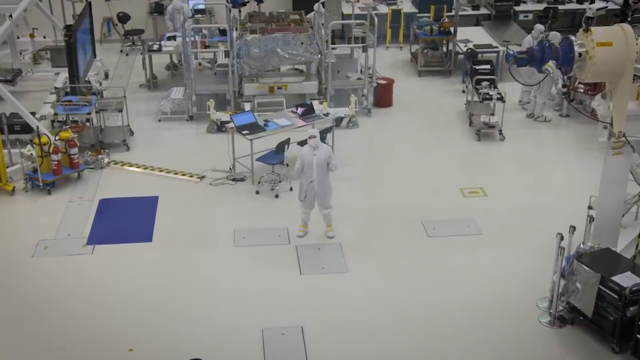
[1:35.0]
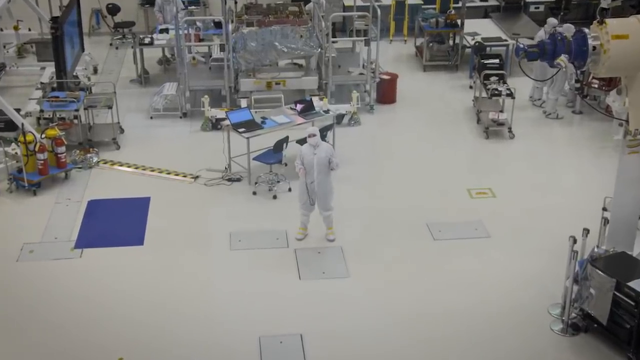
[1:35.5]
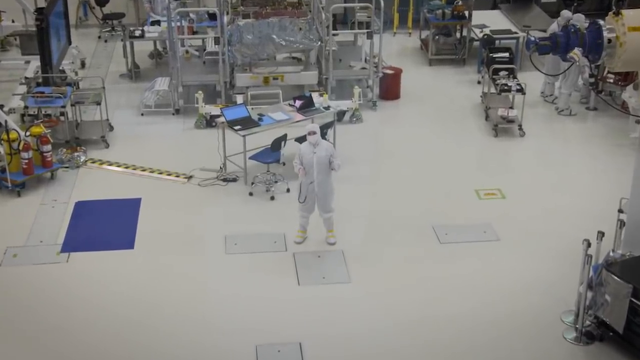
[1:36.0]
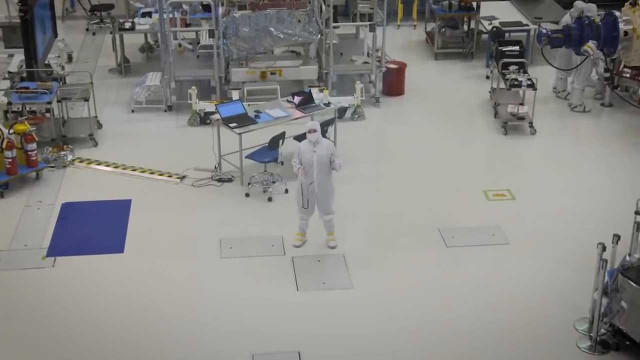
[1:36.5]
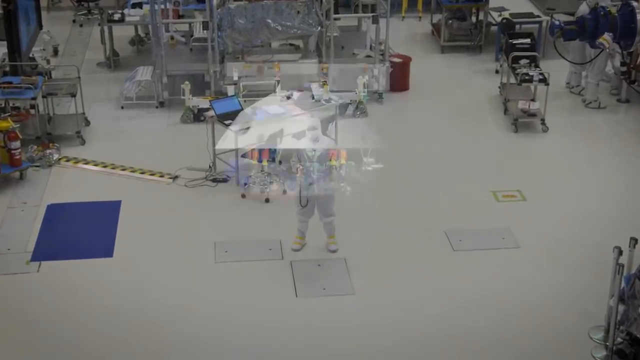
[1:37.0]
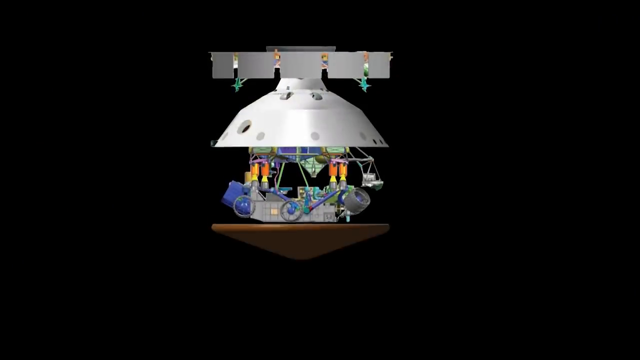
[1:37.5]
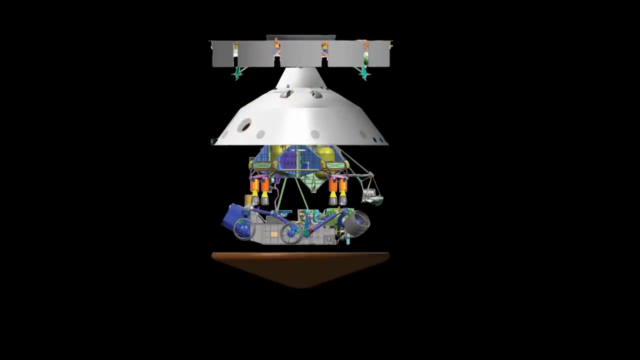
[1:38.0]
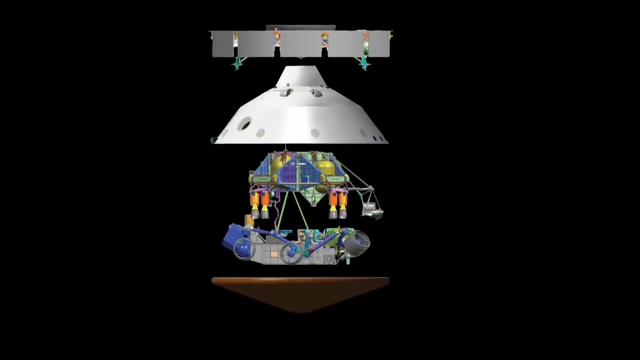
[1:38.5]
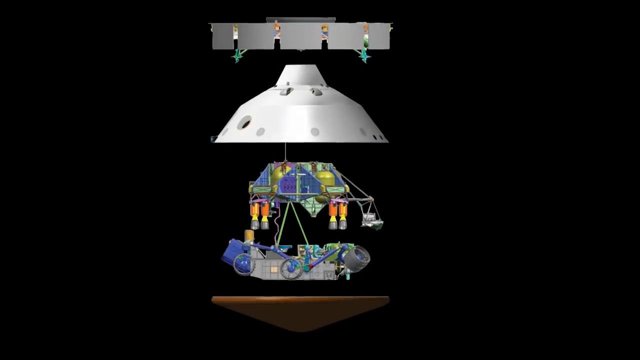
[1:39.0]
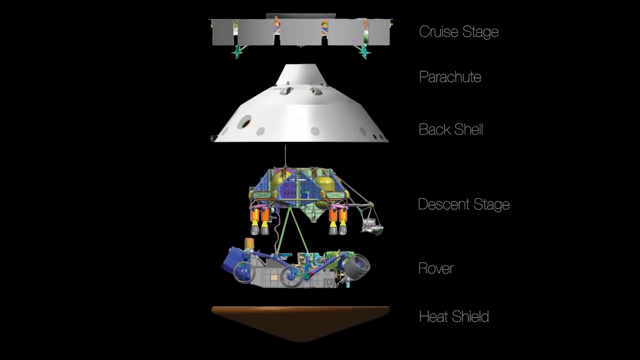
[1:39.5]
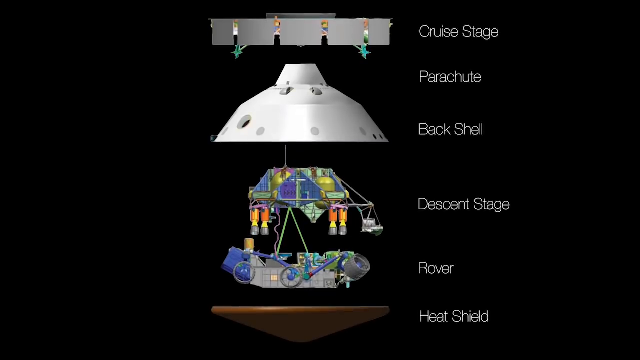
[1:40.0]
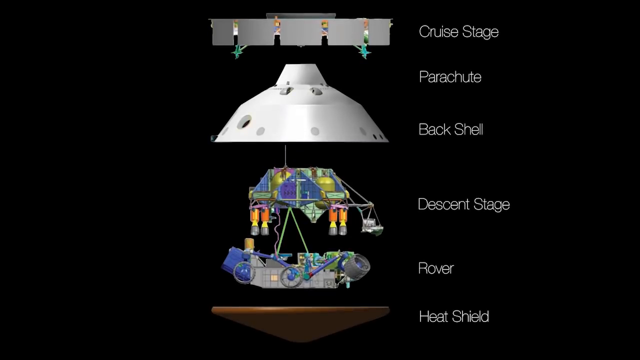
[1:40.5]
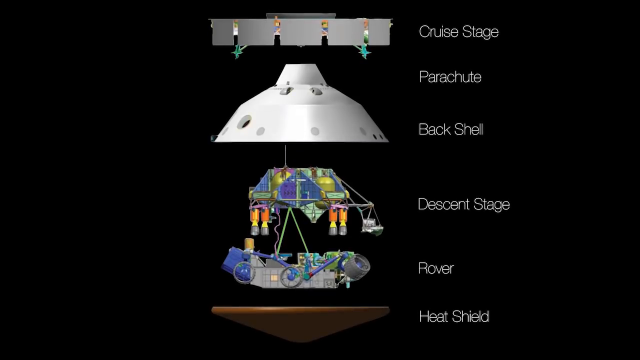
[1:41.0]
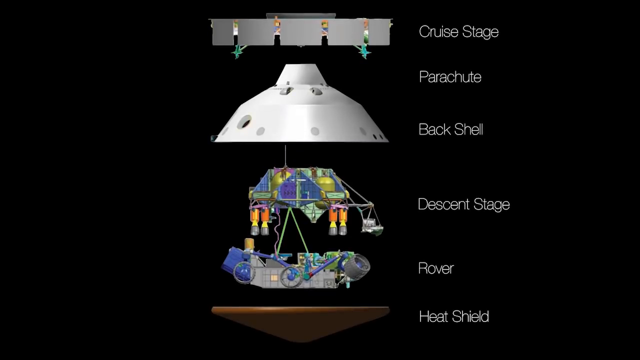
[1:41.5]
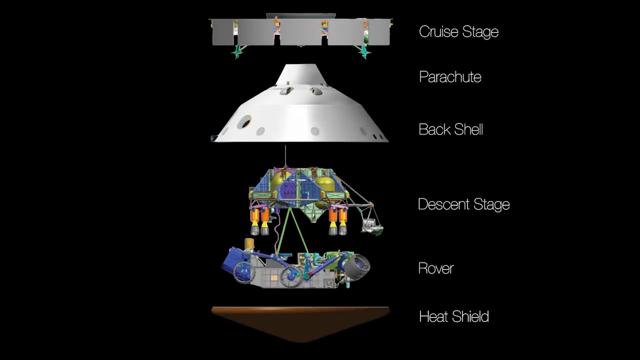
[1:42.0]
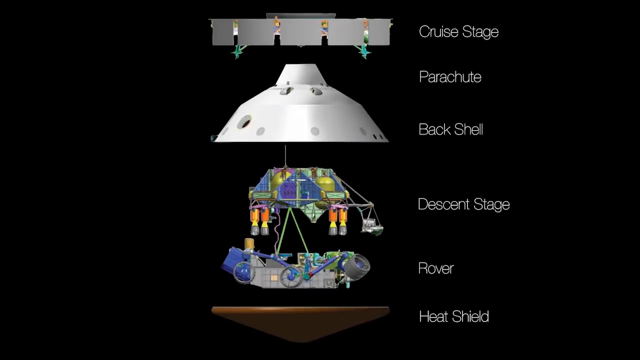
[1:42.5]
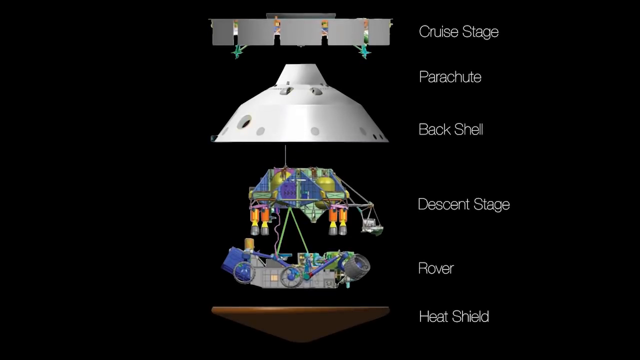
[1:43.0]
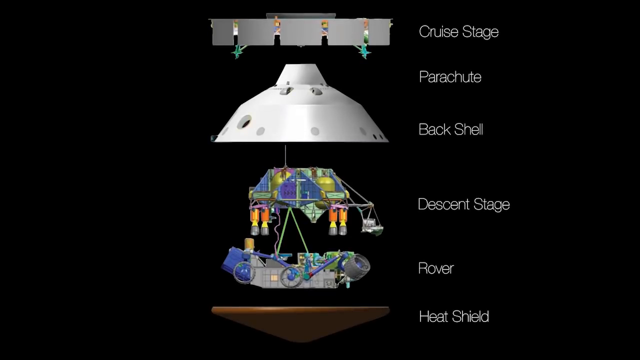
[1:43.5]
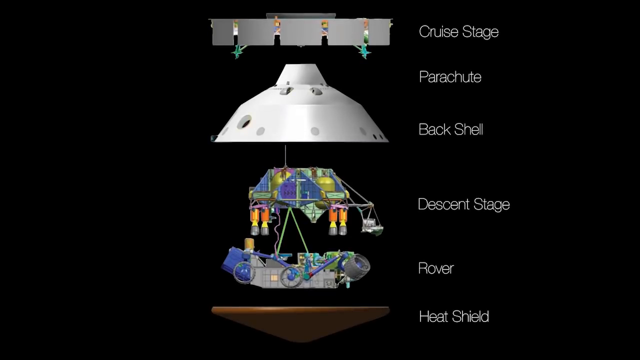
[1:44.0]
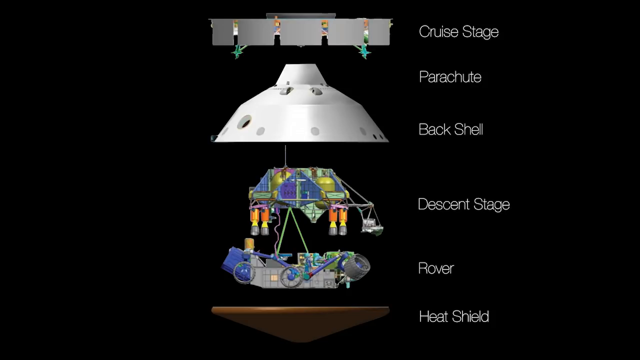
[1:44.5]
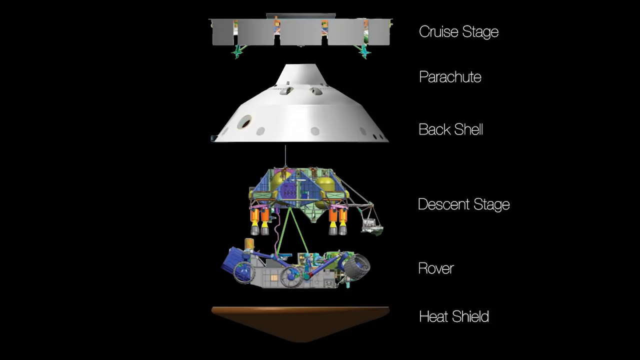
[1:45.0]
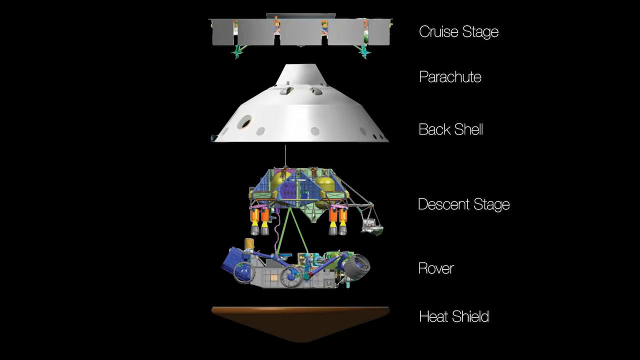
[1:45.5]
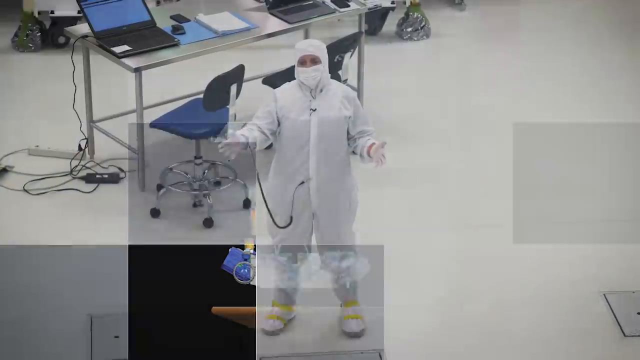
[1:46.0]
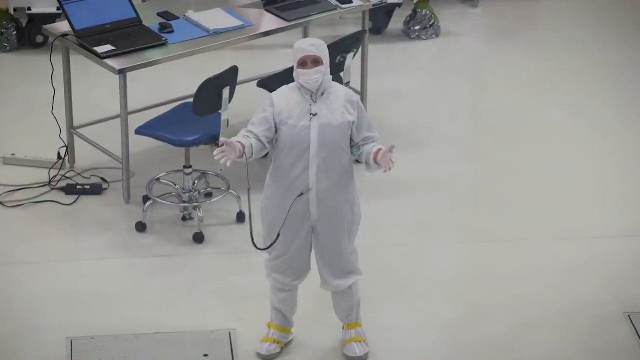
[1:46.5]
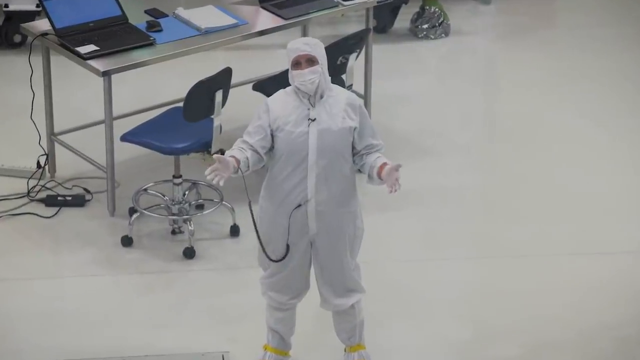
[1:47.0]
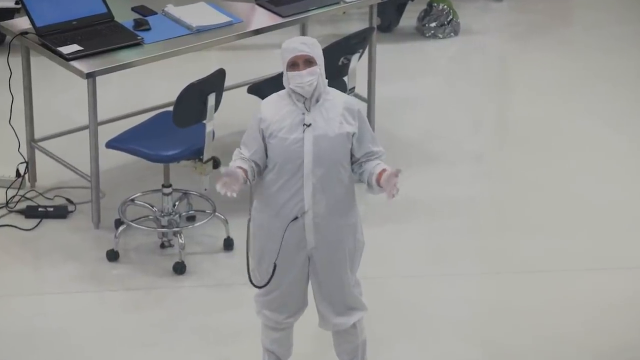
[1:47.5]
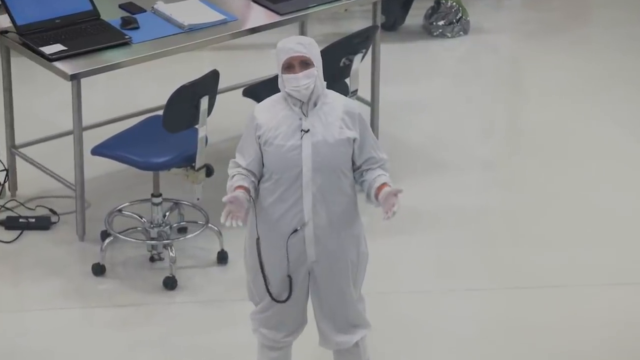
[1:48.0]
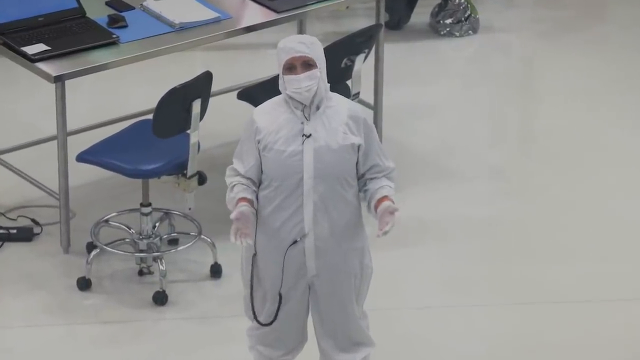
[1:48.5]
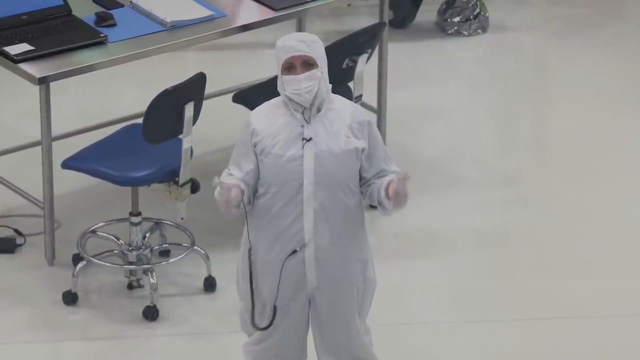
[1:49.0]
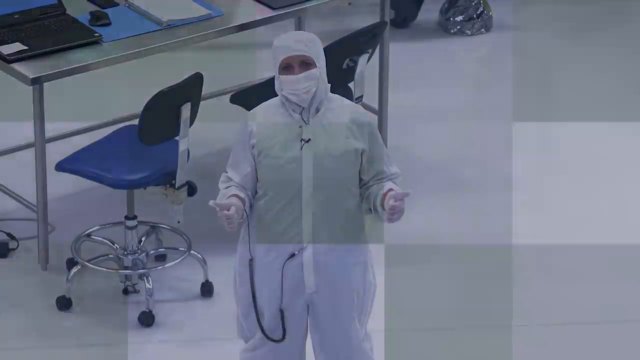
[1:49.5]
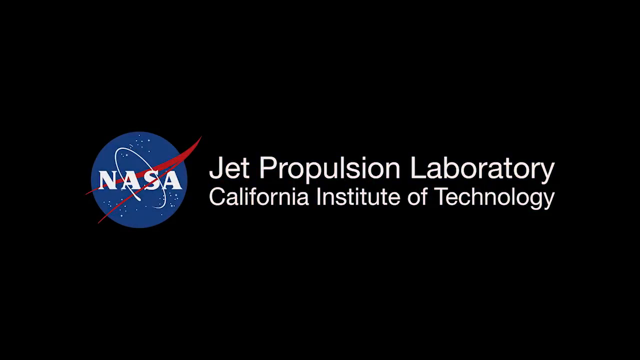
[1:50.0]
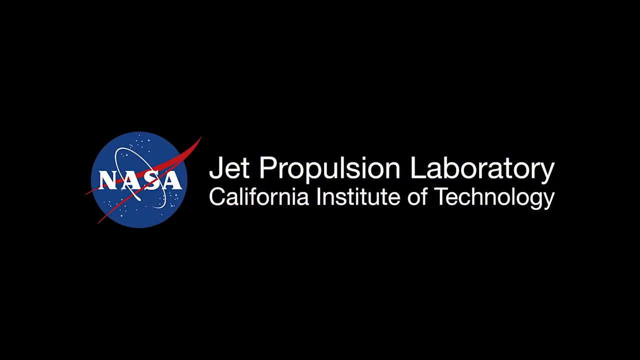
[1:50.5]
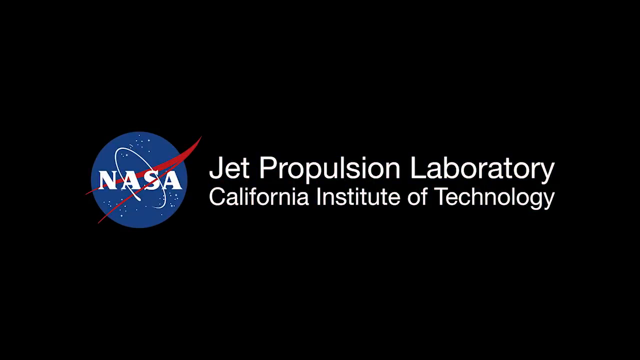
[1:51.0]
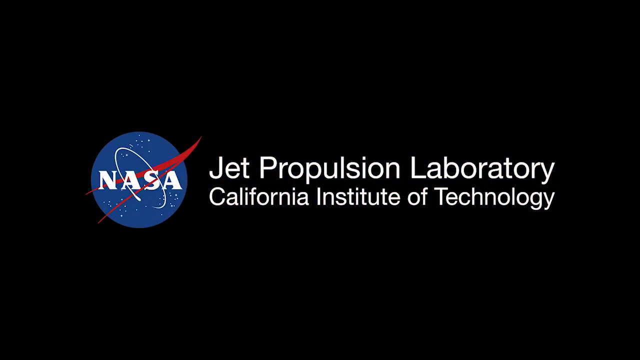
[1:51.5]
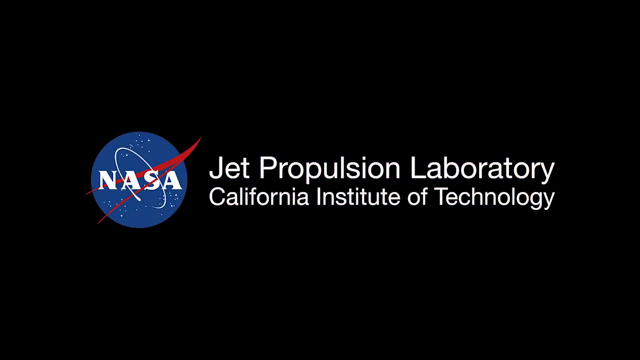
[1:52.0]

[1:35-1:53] The woman is talking on the floor, and then an illustration shows several of the devices being worked on: the white outer shell, the bottom hard shell, and everything packed into the entire device. The layers look like a cruise stage, a parachute, a back shell, a descent stage, and, at the very bottom, the rover inside a heat shield. Around this Jet Propulsion Laboratory facility, the components that will be stacked on top of one another are being built.